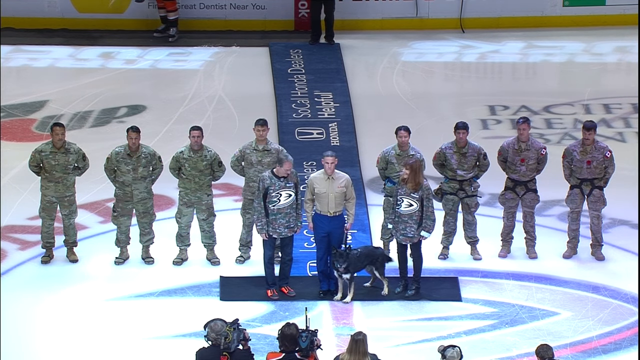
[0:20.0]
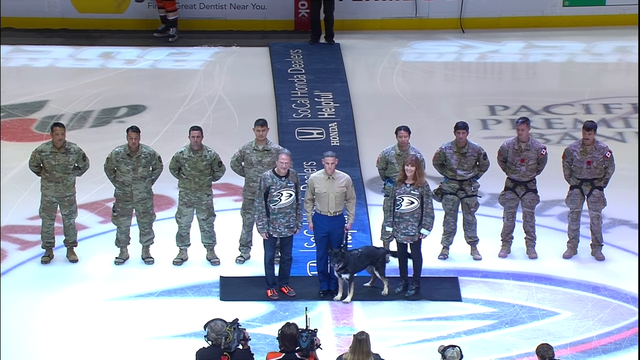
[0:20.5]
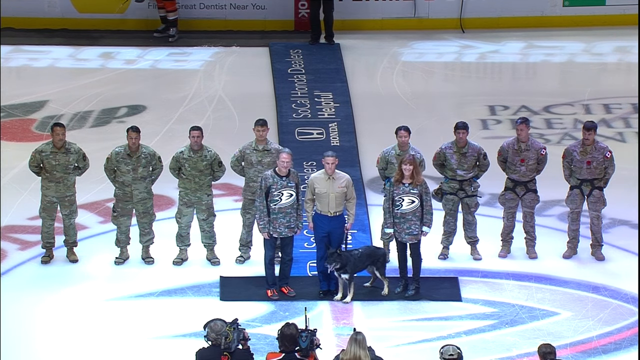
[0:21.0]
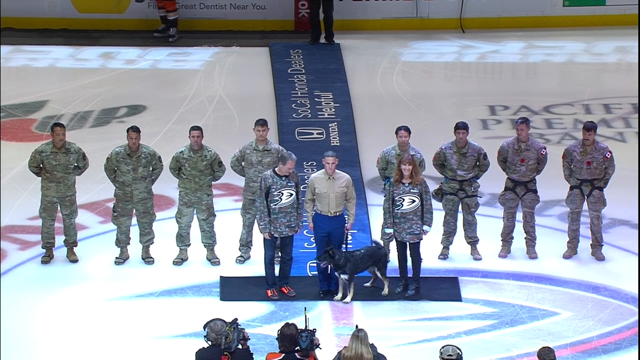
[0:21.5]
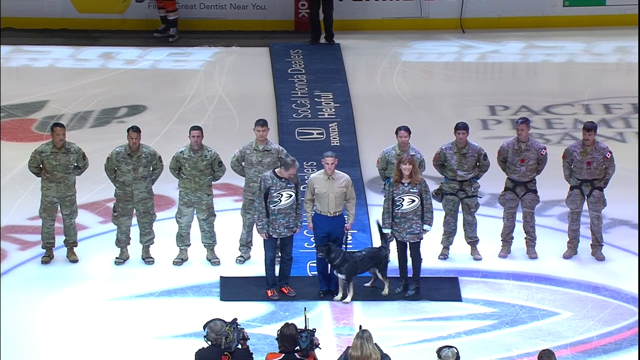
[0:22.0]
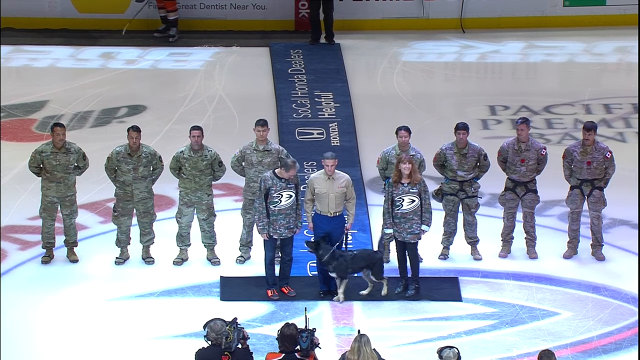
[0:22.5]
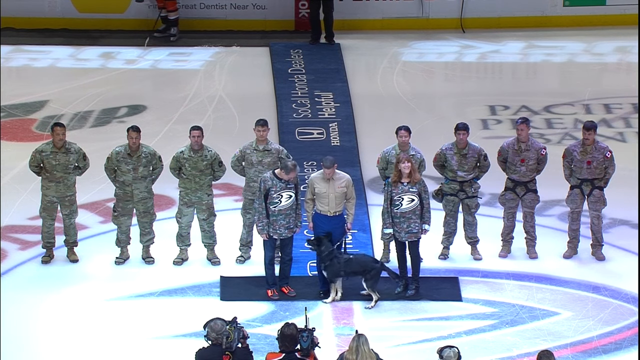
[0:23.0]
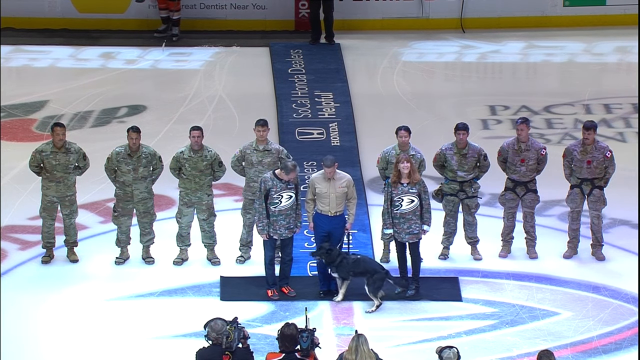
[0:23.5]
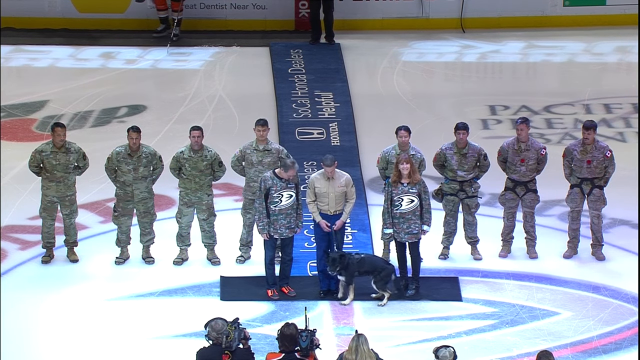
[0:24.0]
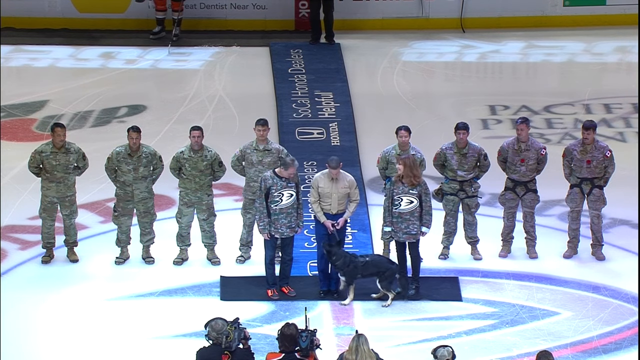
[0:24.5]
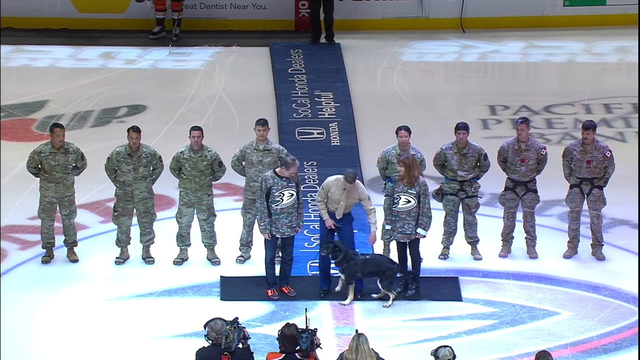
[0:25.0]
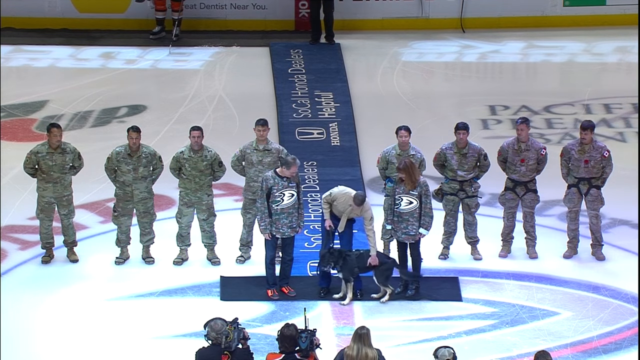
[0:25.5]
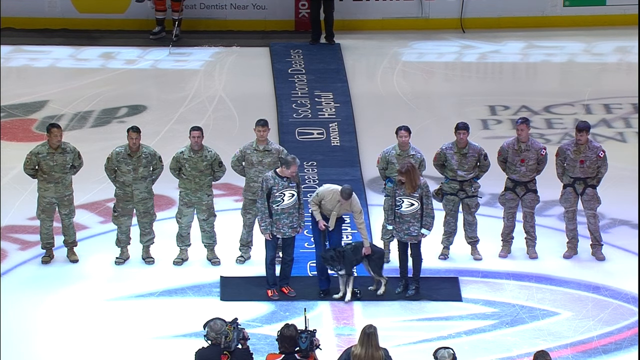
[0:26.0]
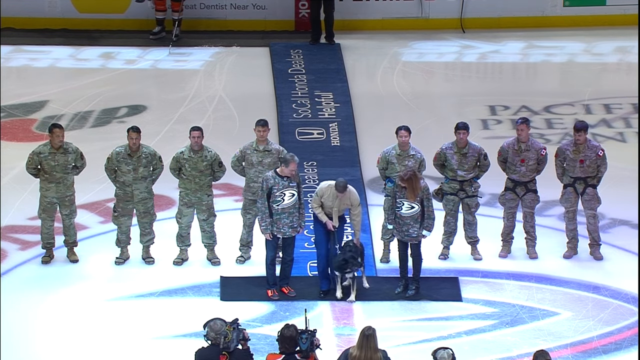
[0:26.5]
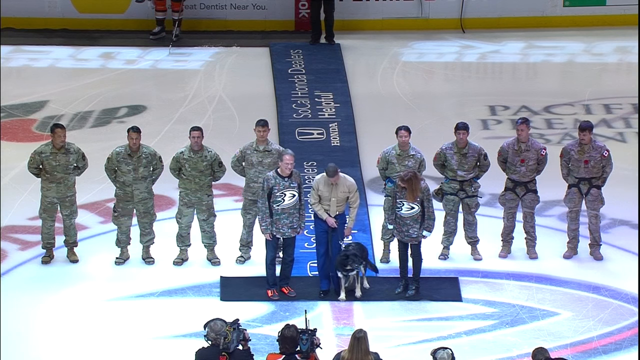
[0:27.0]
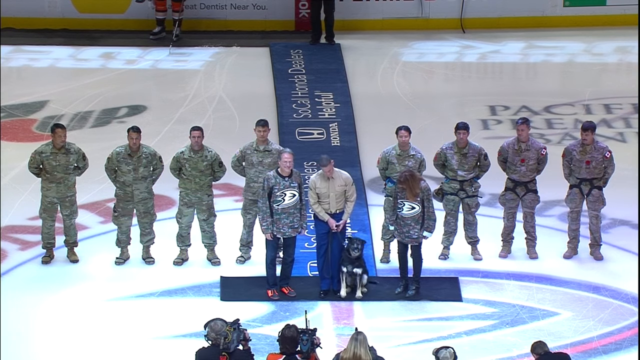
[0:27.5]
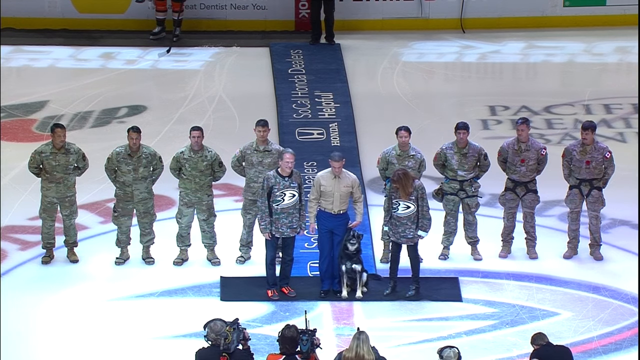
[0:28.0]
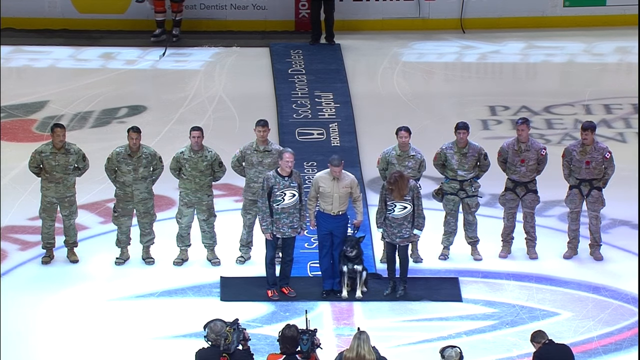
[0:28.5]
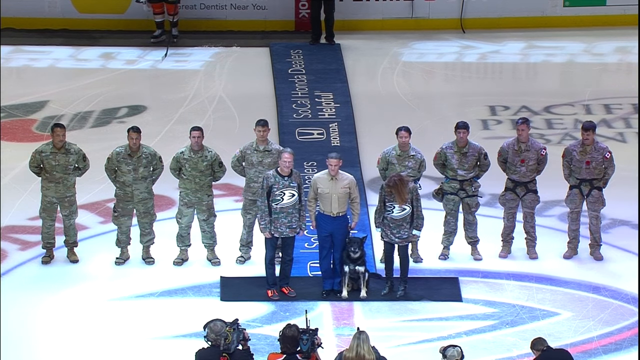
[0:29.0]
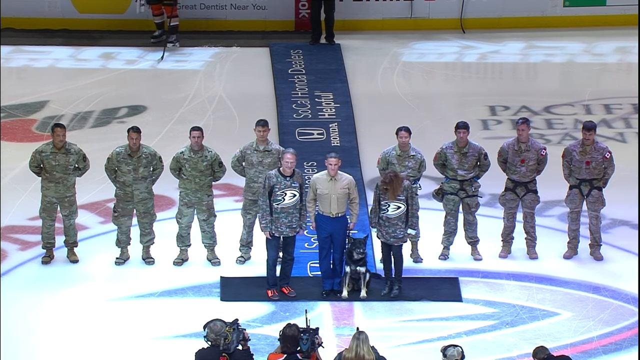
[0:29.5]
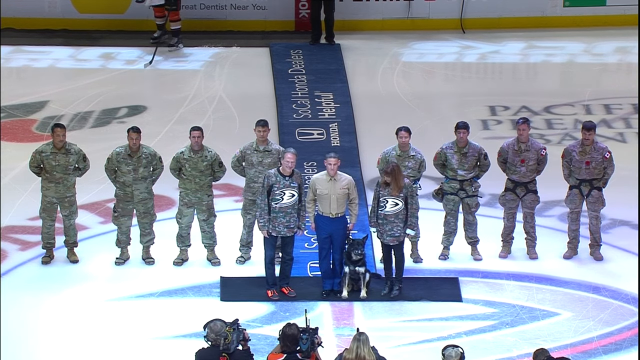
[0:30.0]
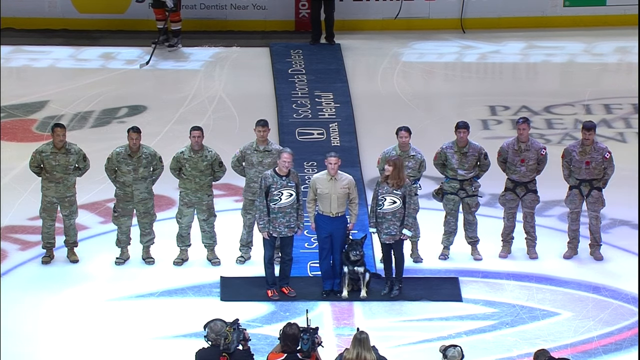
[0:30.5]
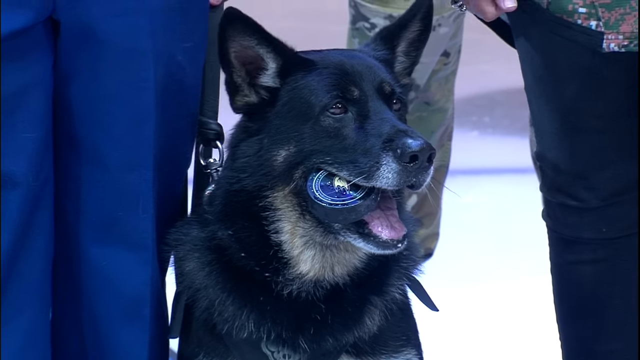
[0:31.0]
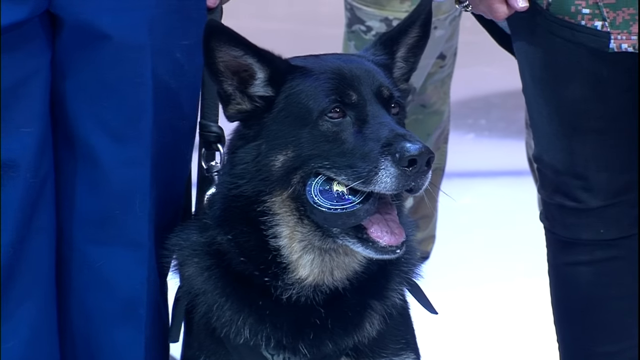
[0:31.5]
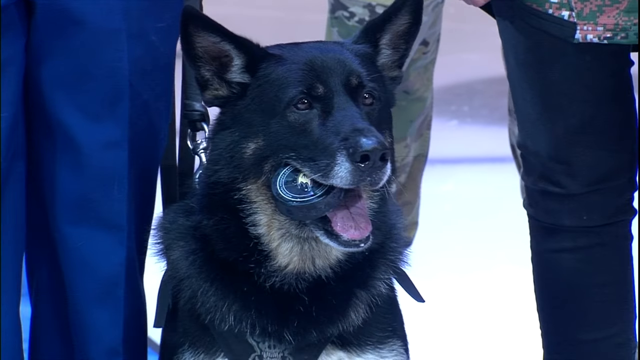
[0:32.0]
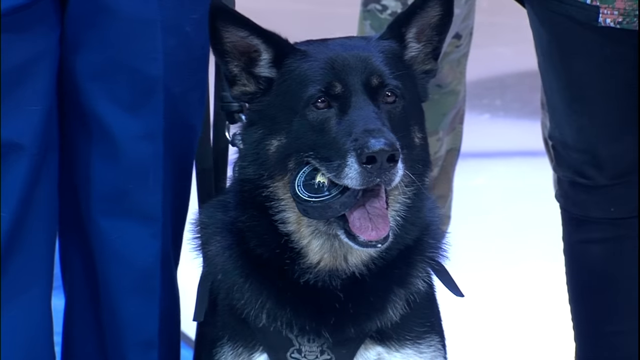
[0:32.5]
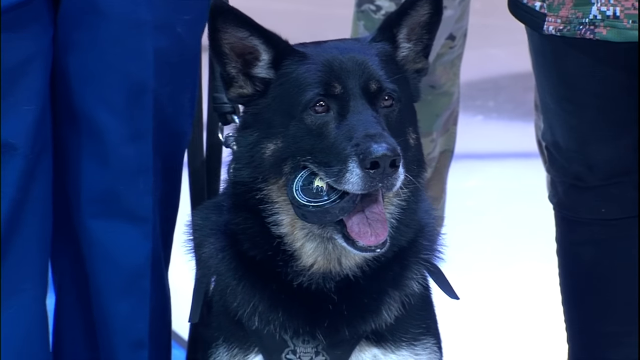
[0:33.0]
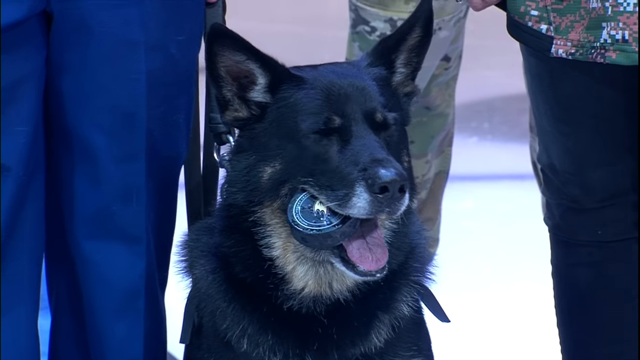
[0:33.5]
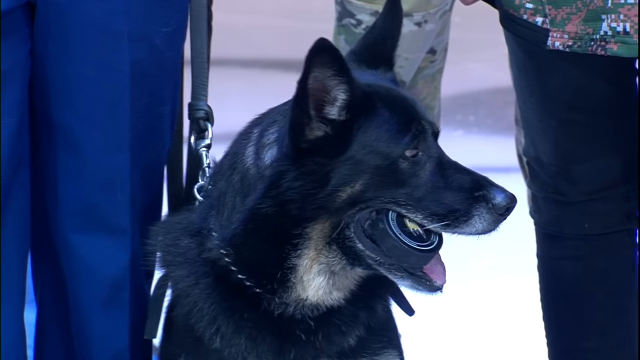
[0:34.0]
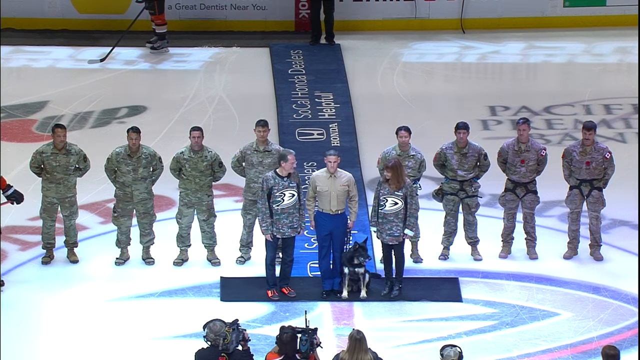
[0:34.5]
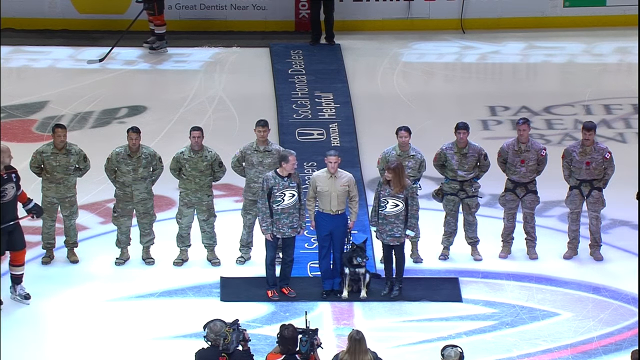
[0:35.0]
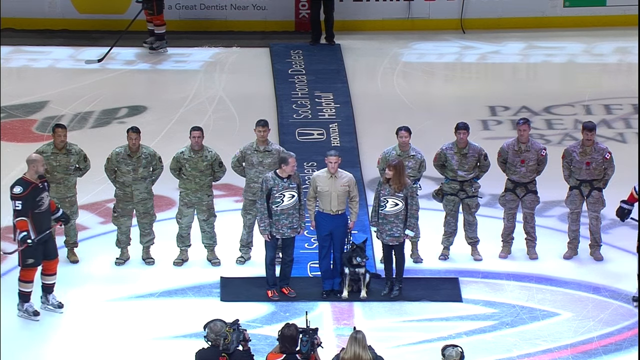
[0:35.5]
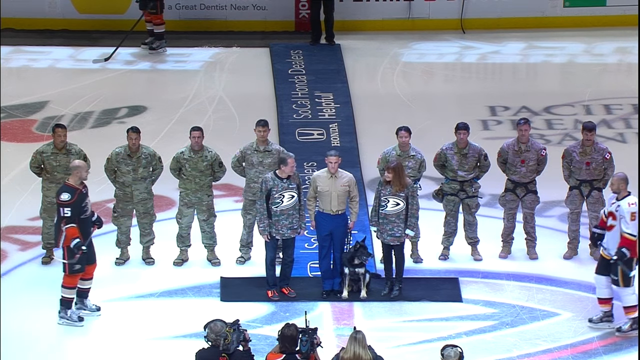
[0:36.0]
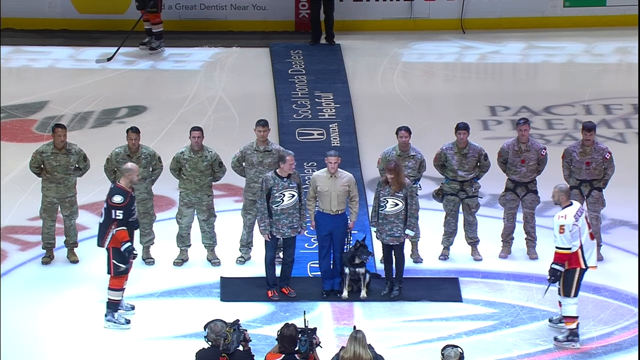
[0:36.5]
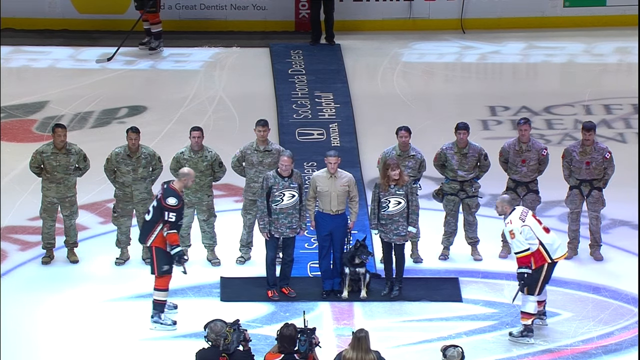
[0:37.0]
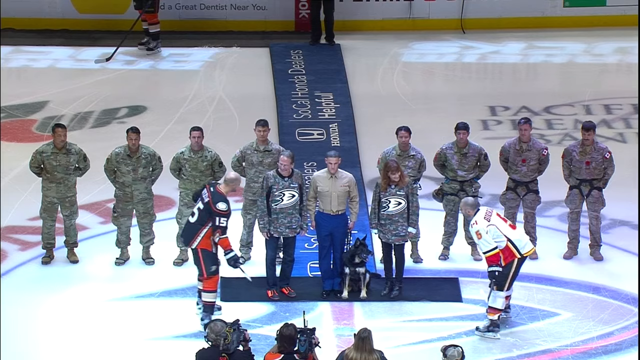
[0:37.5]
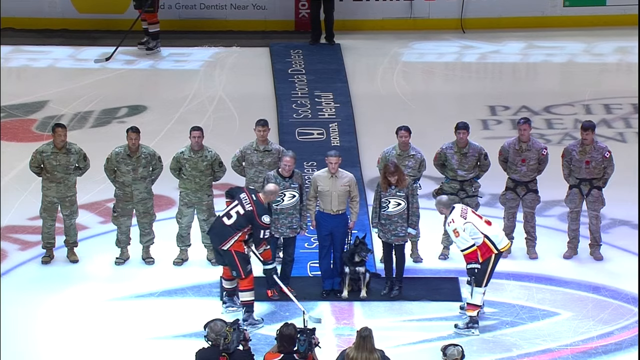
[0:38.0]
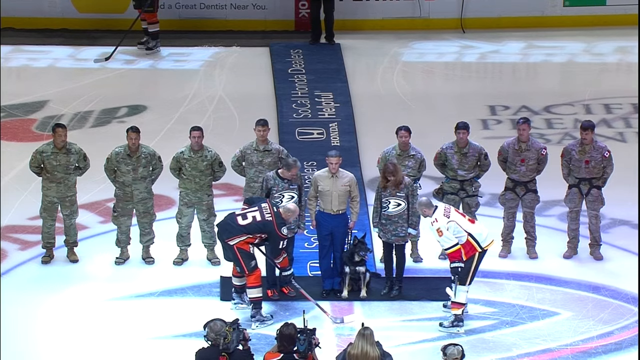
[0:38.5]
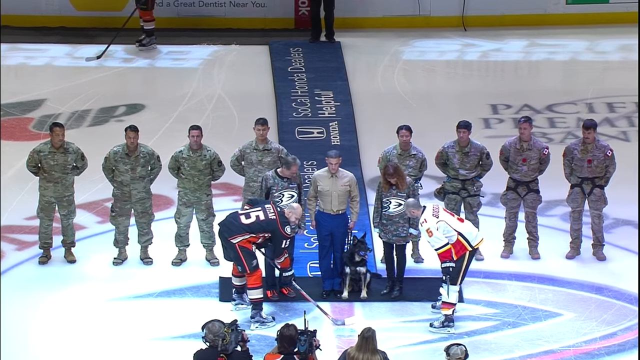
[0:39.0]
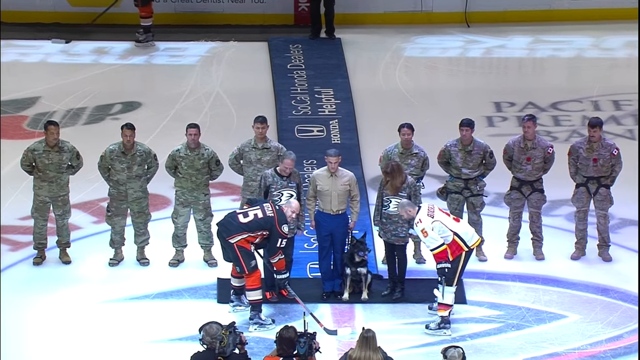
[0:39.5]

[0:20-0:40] What looks like an aerial view of a gymnasium shows four people fully clad in U.S. Army clothes on the left side of the screen and another four on the right side. In front of them are three people. The man in the middle wears a long-sleeved tan shirt and blue pants and holds a leash with a large dog. On his left and right is one person each wearing an Army-colored shirt and jeans. They all stand facing forward, staring at a group of people who are recording and taking photos. The dog moves around, and the man in the tan shirt pulls him around to his side; the dog sits and faces forward. The video zooms in on the dog's face, and the dog is holding what looks like a blue hockey puck in its mouth. Two hockey players then move in from the left and right sides of the frame toward the center and put their hockey sticks down on the floor in front of the dog.